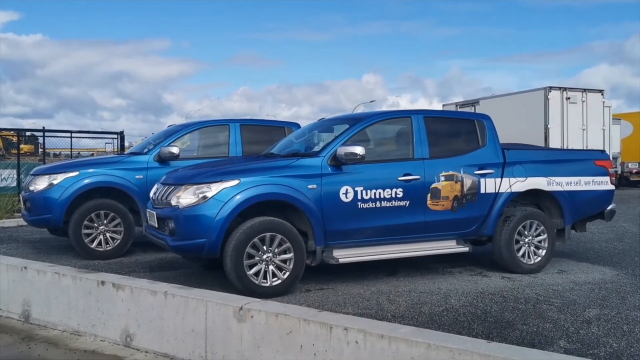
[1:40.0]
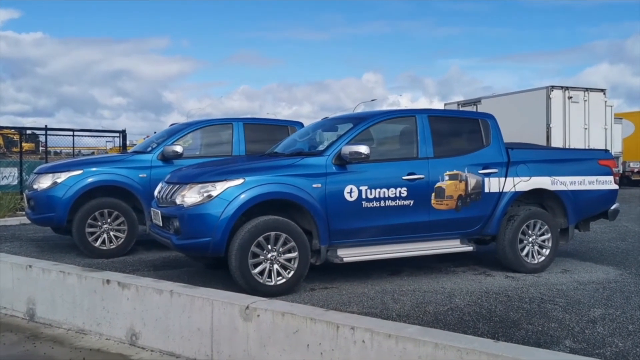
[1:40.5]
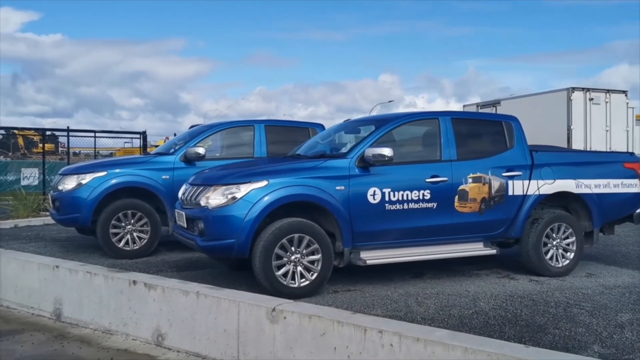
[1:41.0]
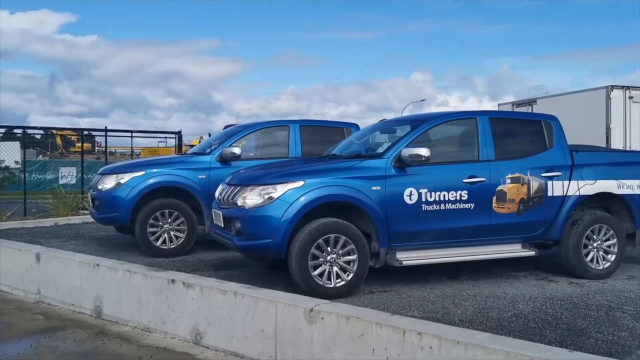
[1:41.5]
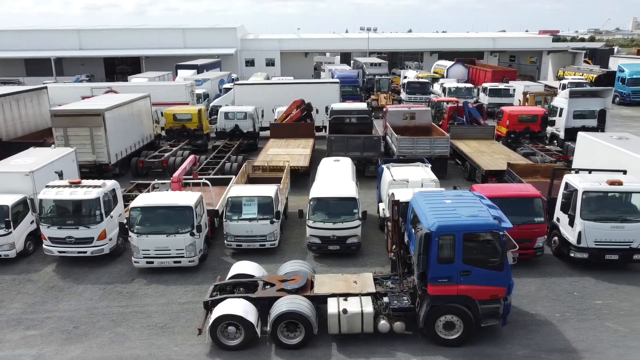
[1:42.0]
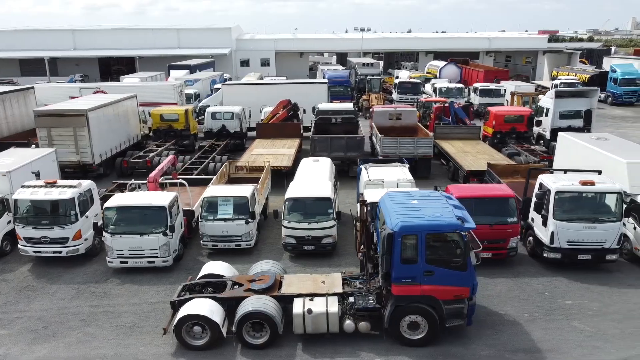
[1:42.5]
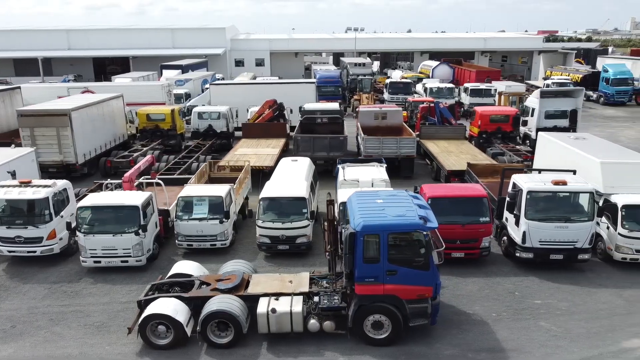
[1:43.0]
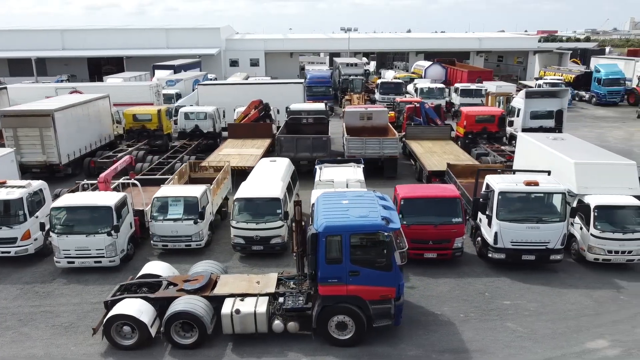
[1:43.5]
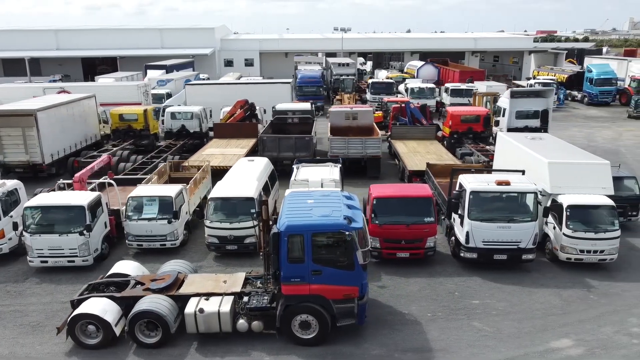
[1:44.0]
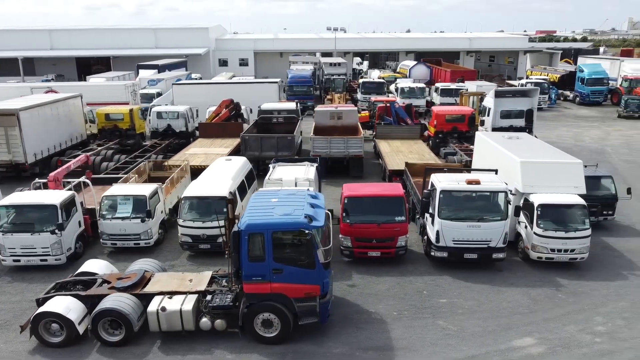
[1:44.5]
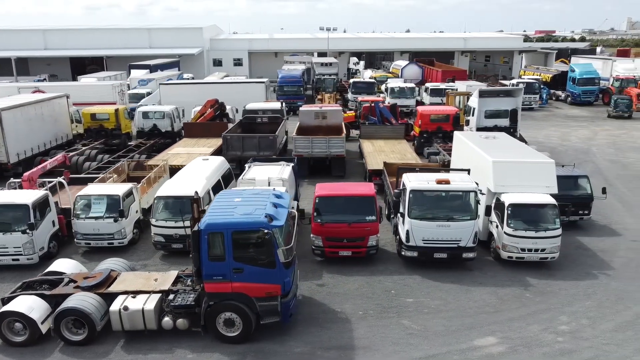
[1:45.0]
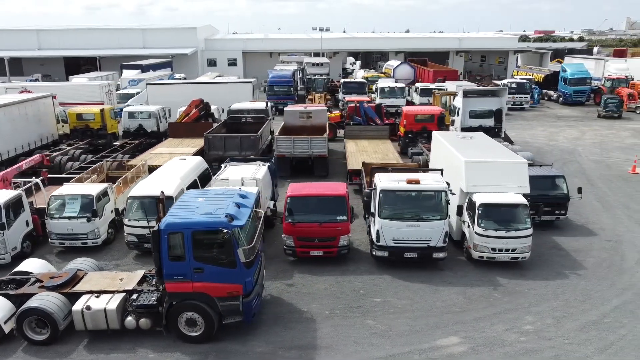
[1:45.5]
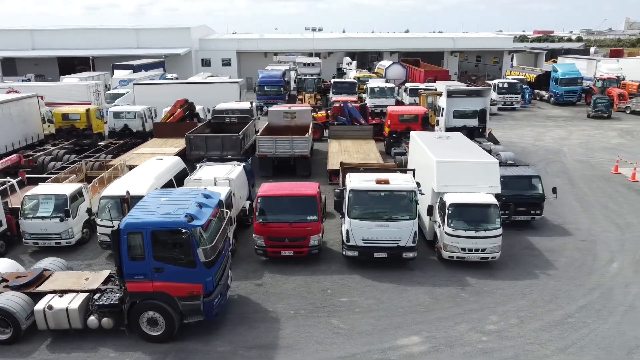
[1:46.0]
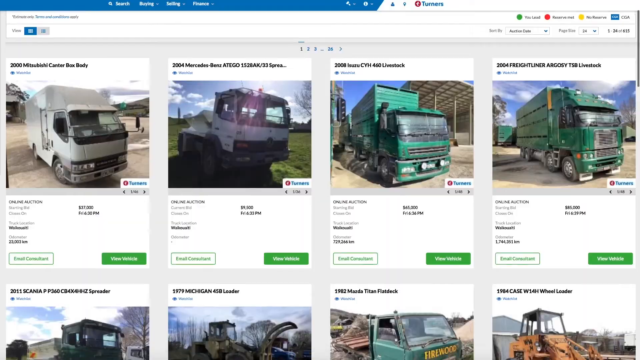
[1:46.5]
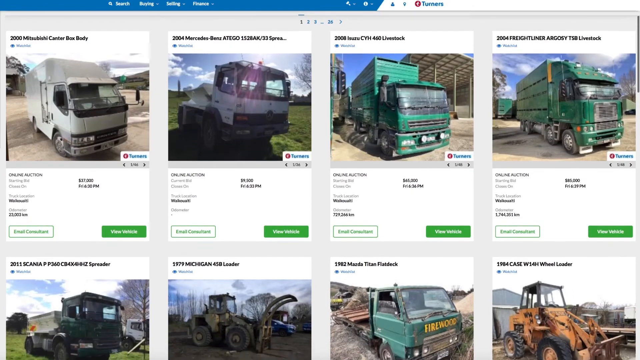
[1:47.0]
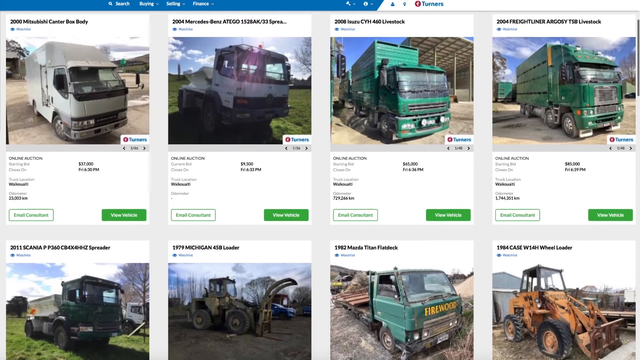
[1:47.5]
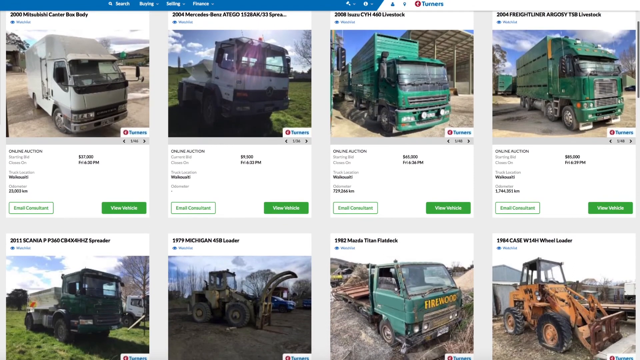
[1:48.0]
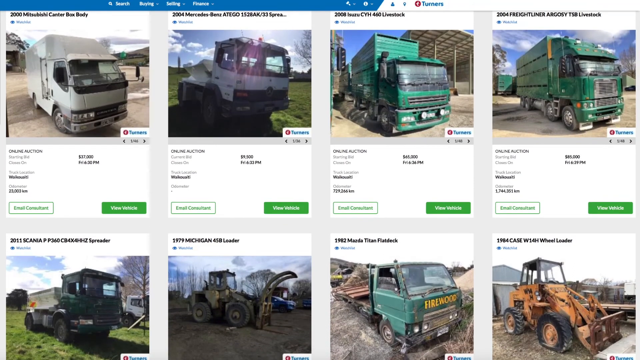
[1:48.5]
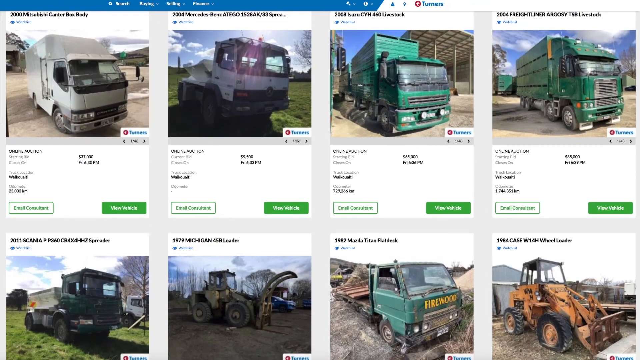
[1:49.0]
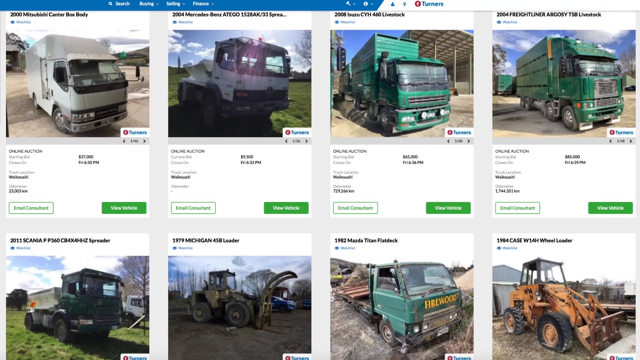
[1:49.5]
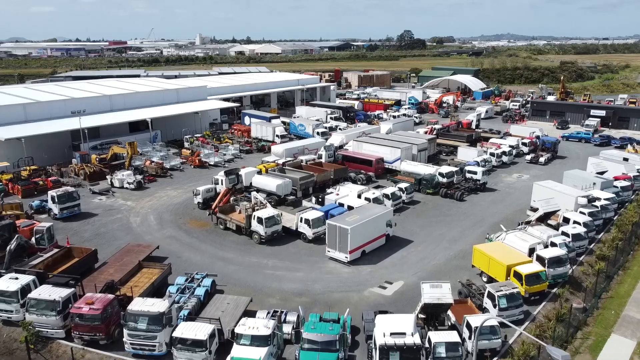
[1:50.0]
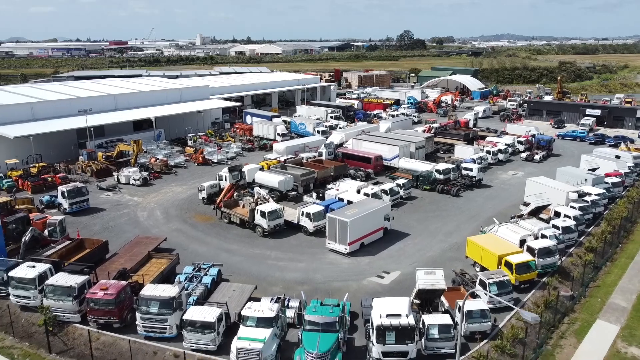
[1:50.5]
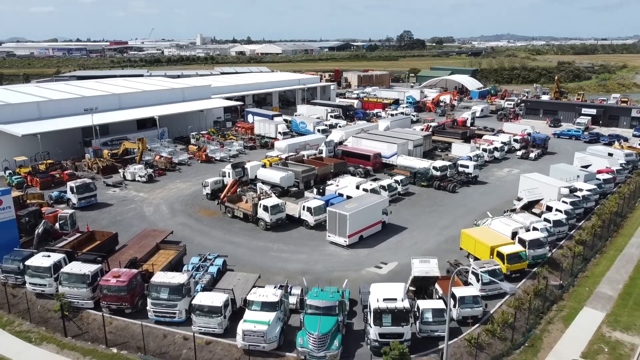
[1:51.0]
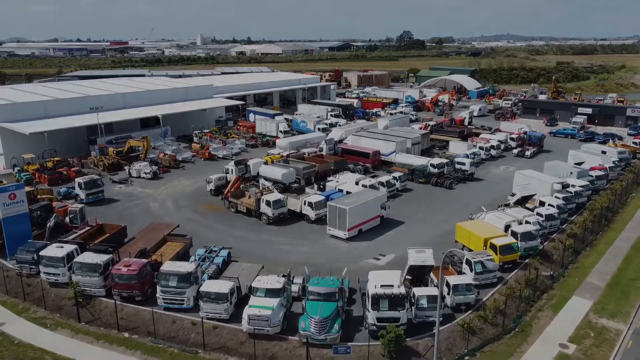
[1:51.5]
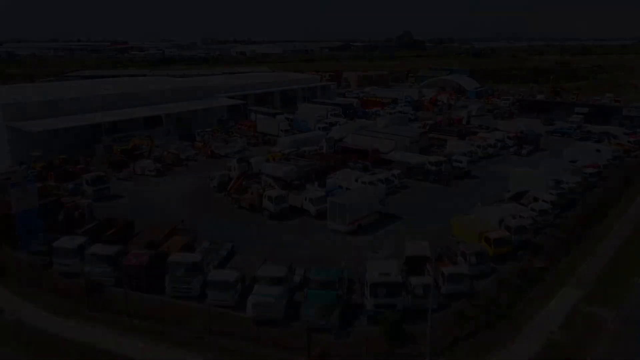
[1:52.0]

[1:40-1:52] The two blue pickup trucks with the Turners logo on the side, quite flashy looking vehicles, are shown first. The camera pans away from them to an aerial shot of the rear of the business property. Images of the vehicles they sell follow, and then another overview. The camera pans from left to right across the rear of the property, which is quite busy. A page from the website shows apparently eight images of different trucks available to purchase.